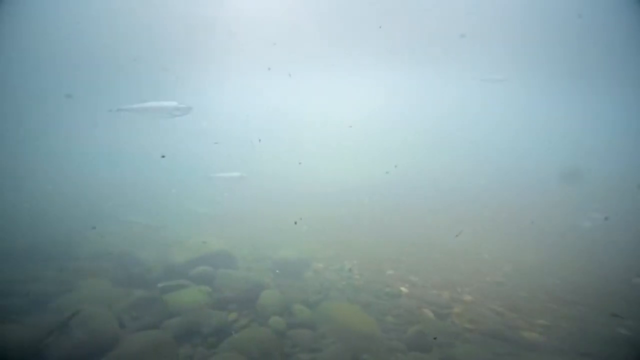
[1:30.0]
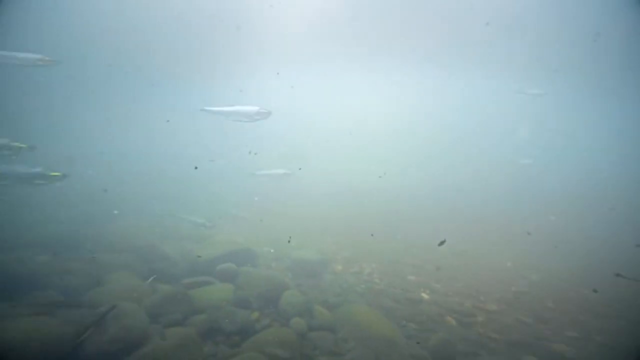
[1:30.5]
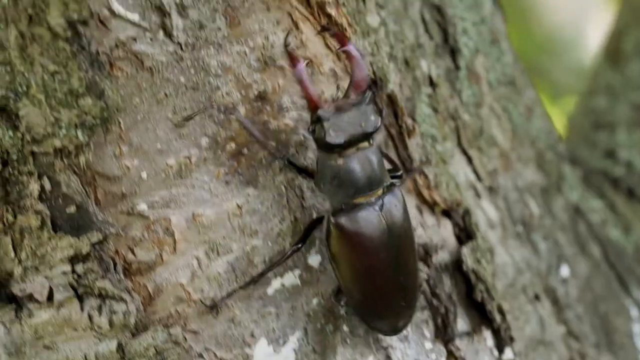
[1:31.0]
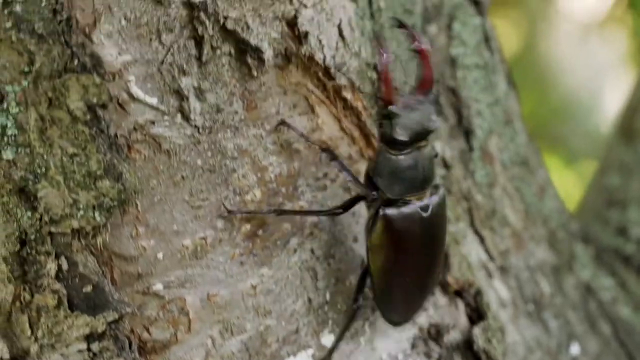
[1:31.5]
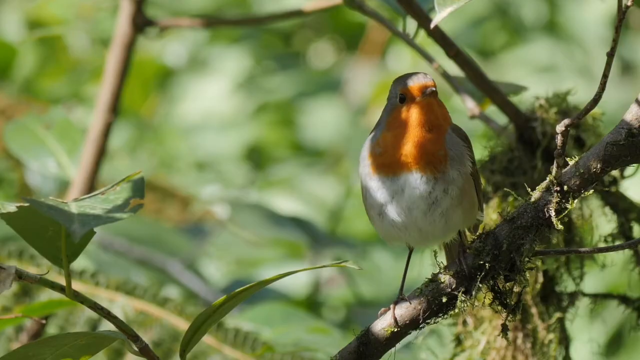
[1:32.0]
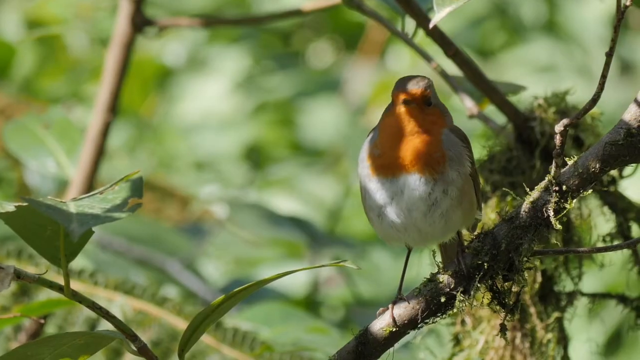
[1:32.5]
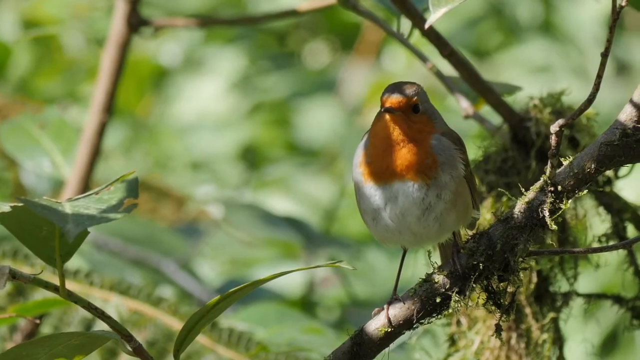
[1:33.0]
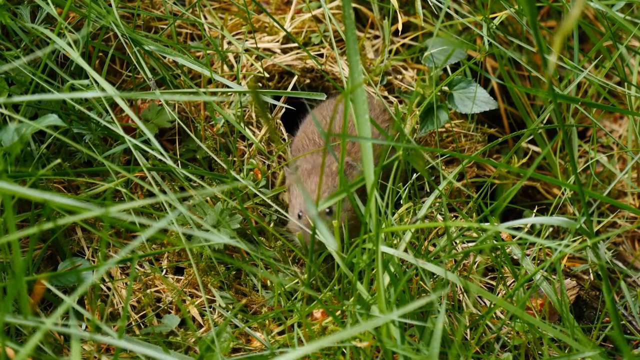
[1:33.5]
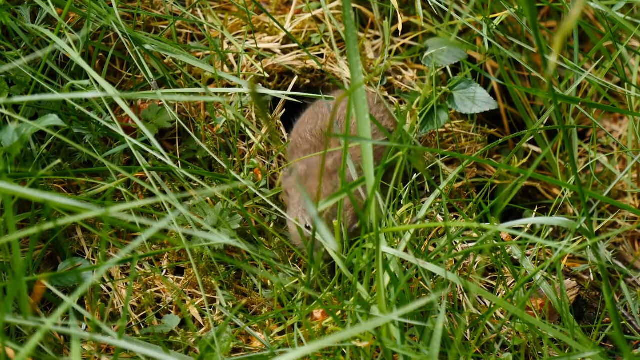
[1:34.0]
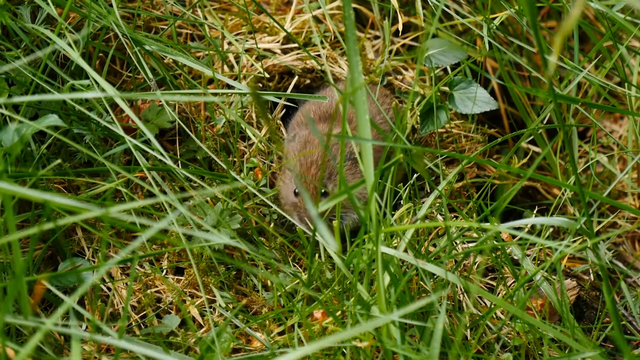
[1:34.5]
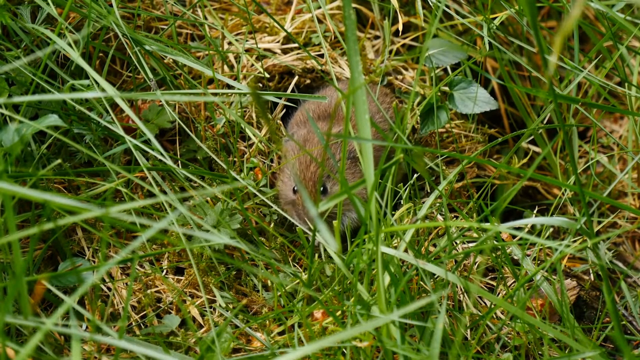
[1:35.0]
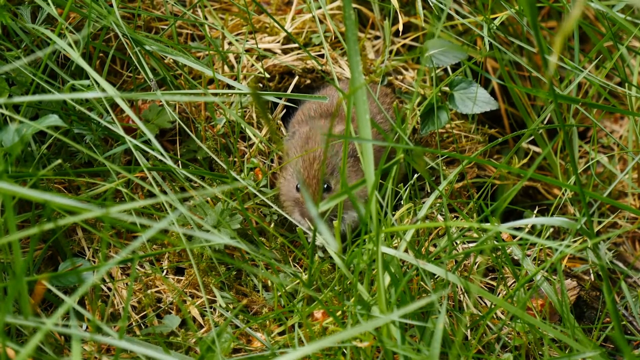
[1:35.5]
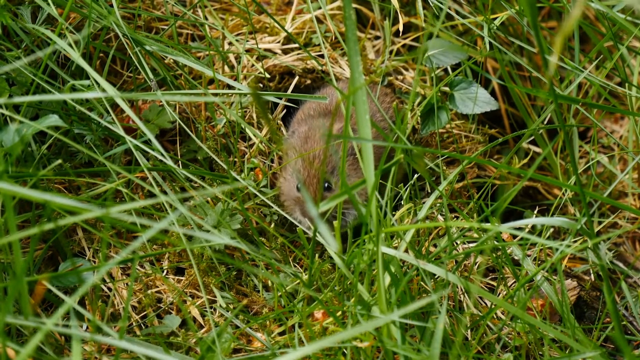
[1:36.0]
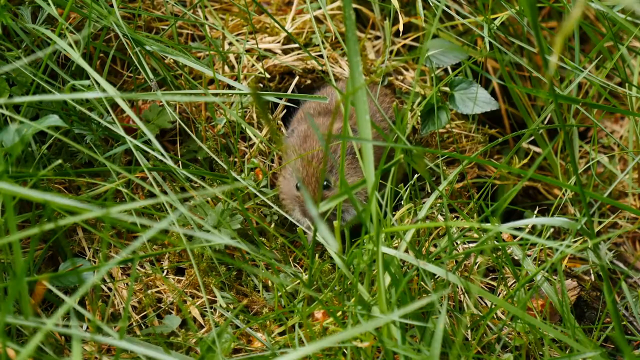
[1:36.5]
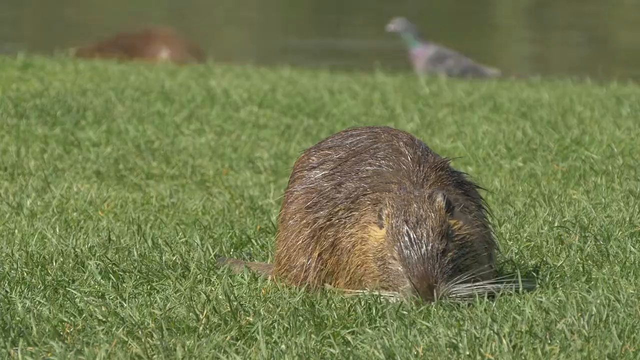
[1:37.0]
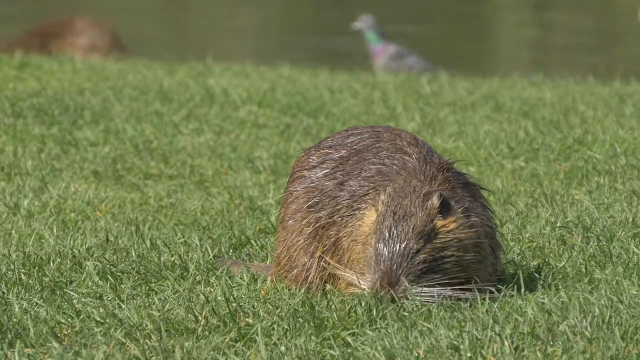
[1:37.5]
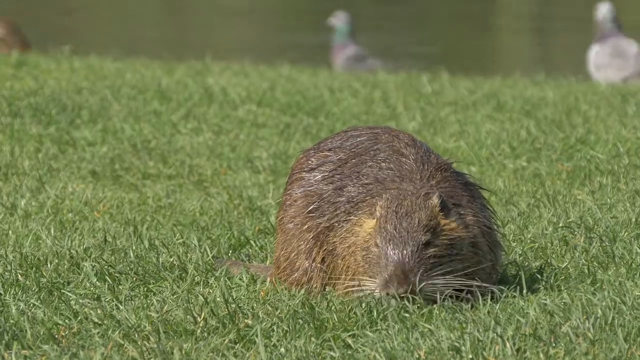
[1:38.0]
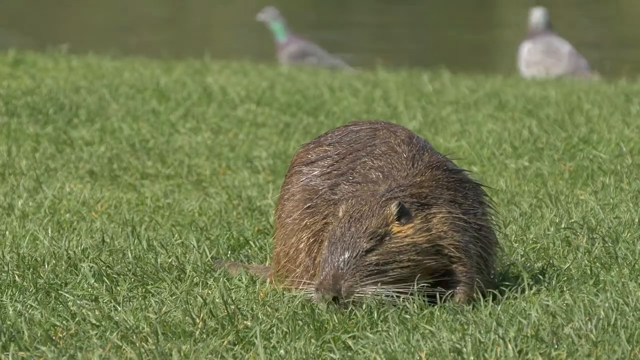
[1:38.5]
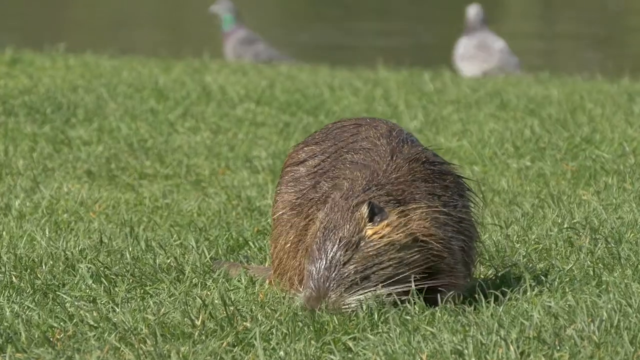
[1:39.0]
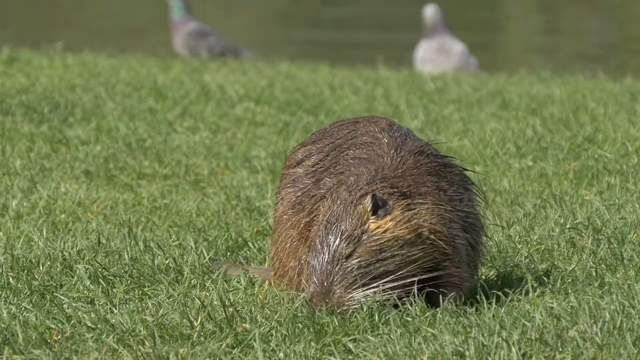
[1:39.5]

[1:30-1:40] An underwater shot shows water shallow enough that sunlight streams through, illuminating it, though the water is semi-murky. The bottom is rocky and sandy, and small, long, thin, silver-colored fish swim. The video then transitions to a beetle climbing the trunk of a tree; the beetle is greenish-brown with red pincers on its head. Next, a bird with thin legs, a white breast, and orange under its beak stands on a thin tree branch. A small rodent is shown in a grassy area. Then a beaver rests on the grassy banks of a river, and another beaver near the river is followed by three pigeons.